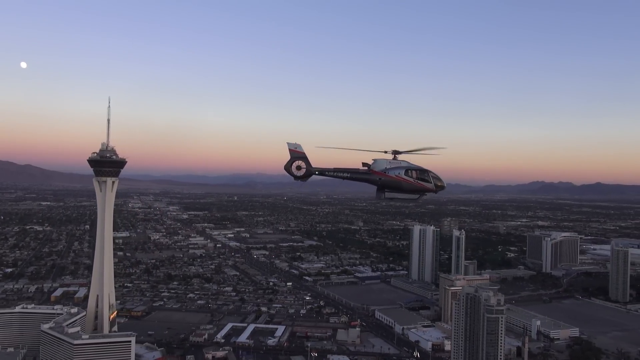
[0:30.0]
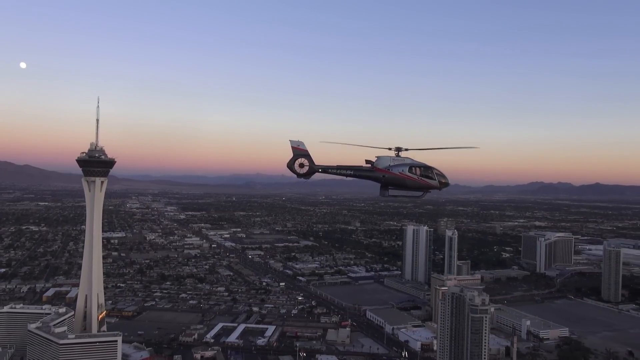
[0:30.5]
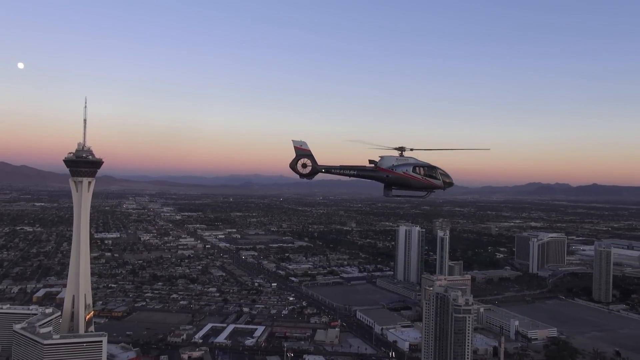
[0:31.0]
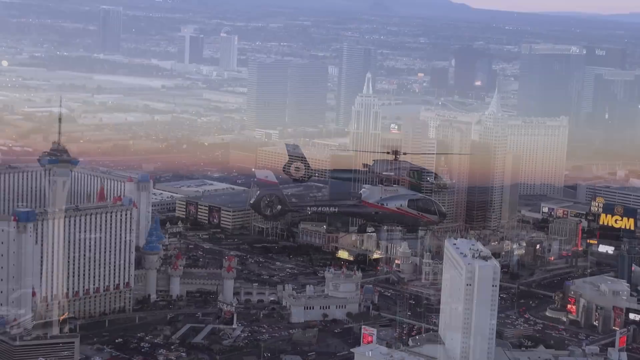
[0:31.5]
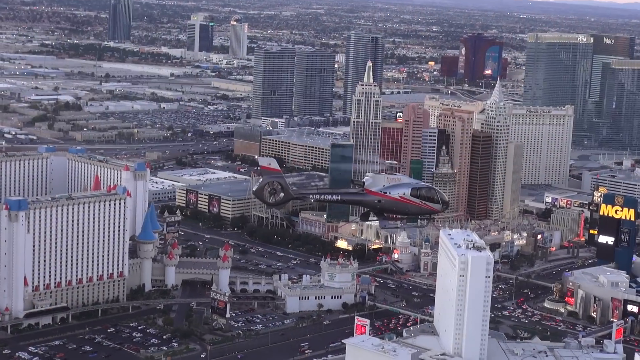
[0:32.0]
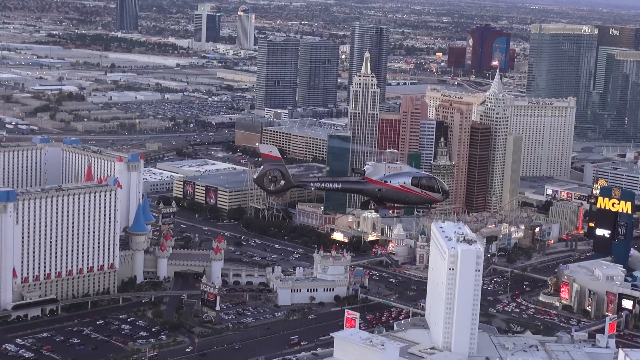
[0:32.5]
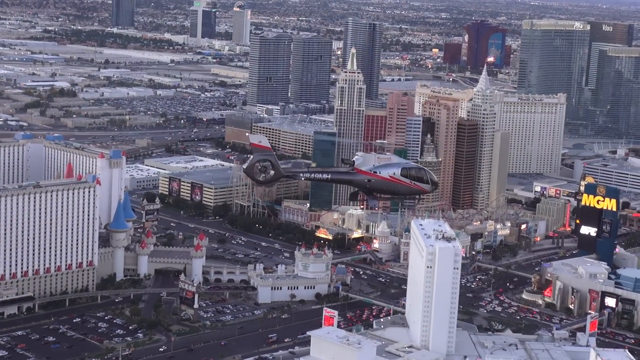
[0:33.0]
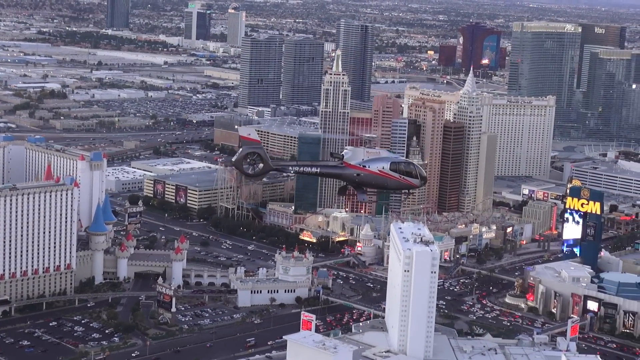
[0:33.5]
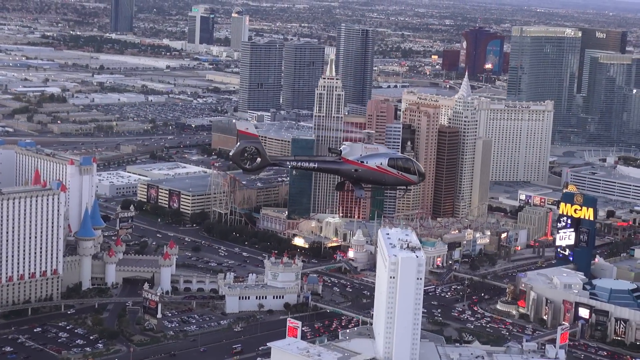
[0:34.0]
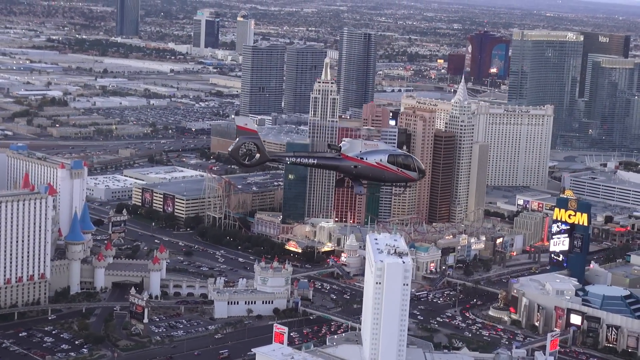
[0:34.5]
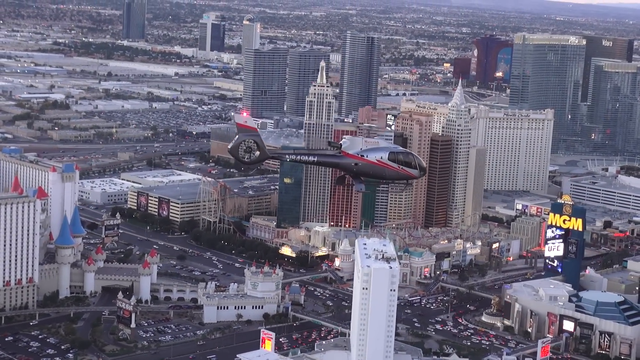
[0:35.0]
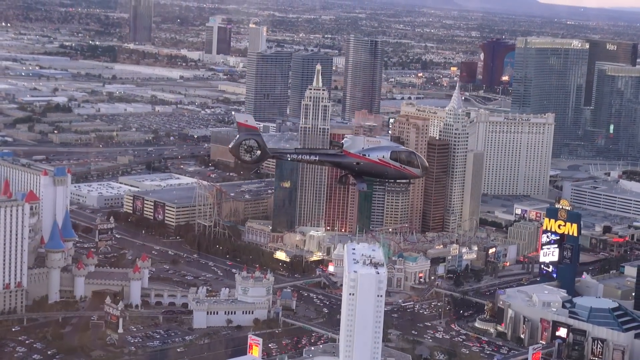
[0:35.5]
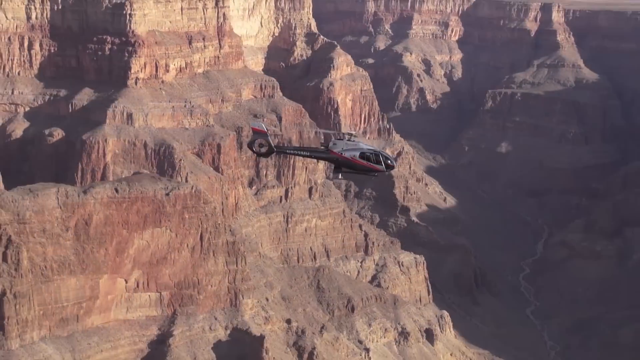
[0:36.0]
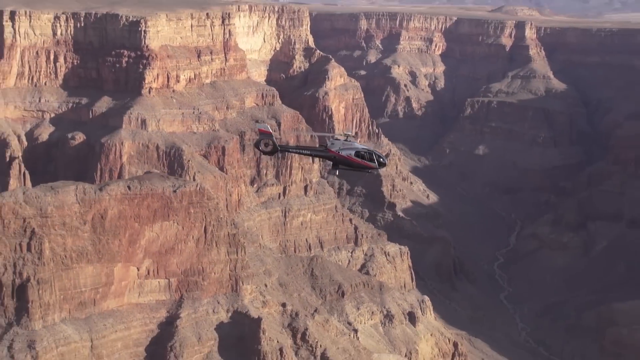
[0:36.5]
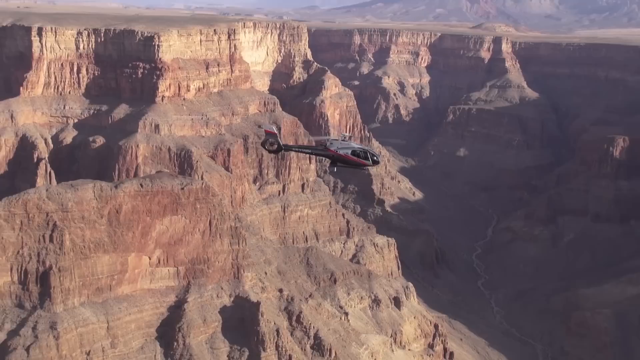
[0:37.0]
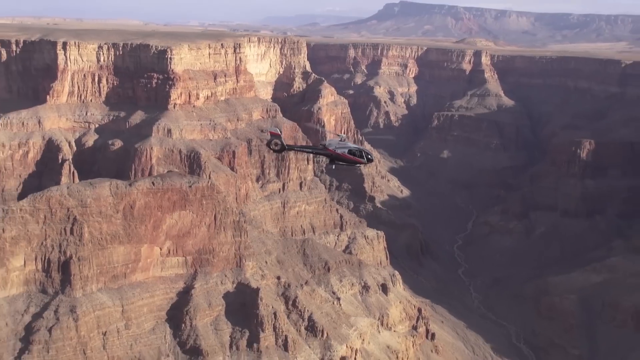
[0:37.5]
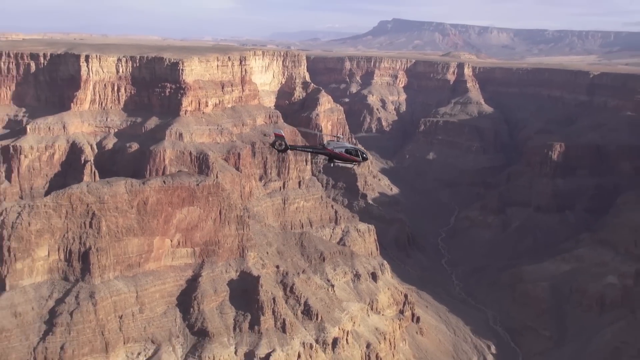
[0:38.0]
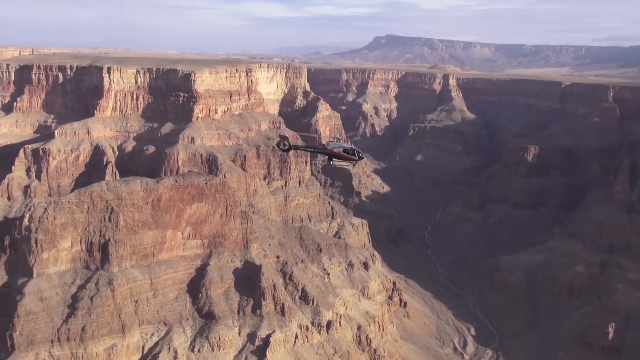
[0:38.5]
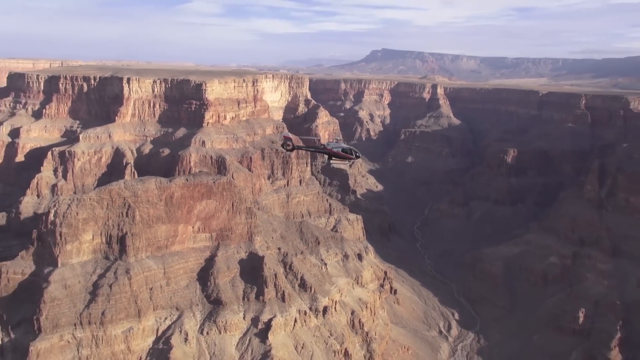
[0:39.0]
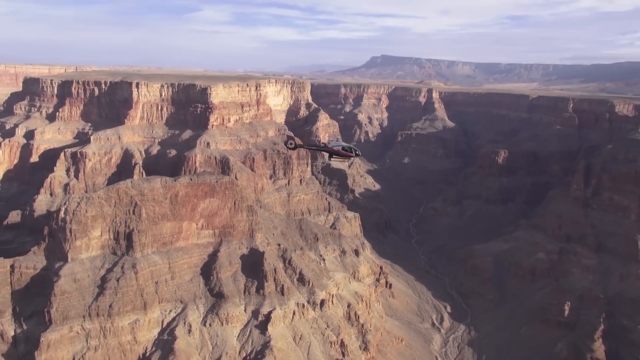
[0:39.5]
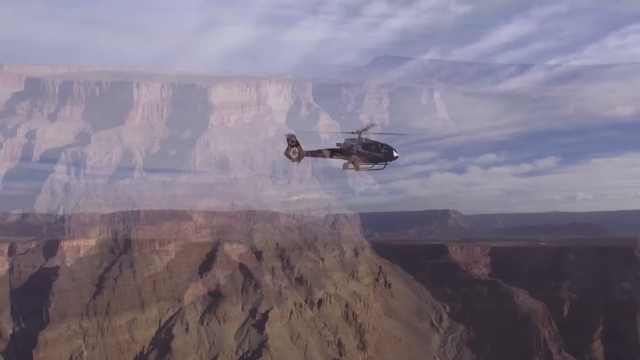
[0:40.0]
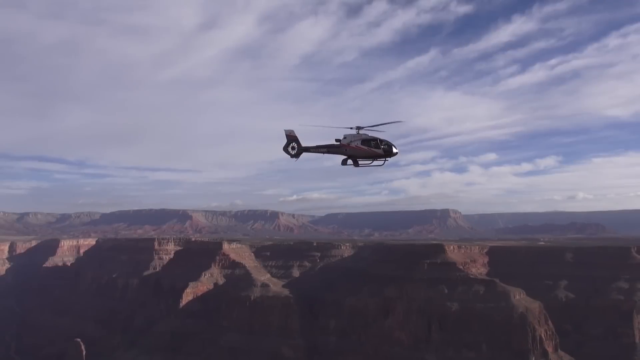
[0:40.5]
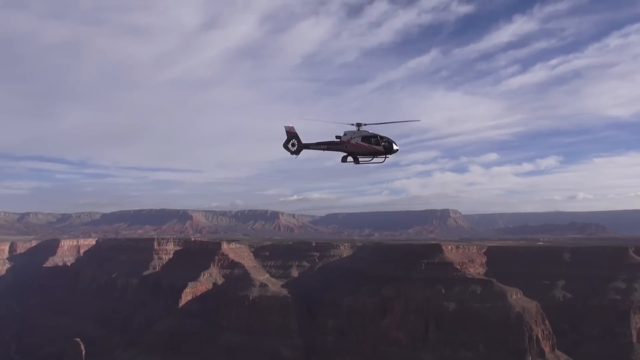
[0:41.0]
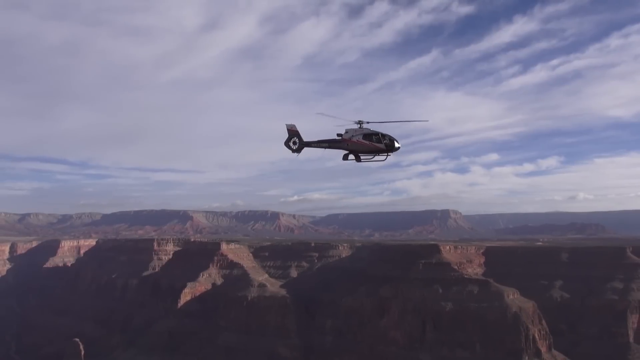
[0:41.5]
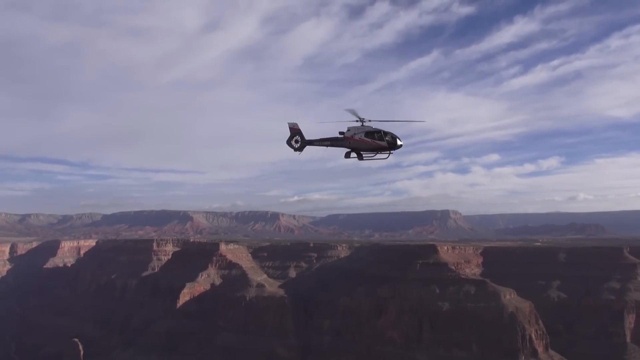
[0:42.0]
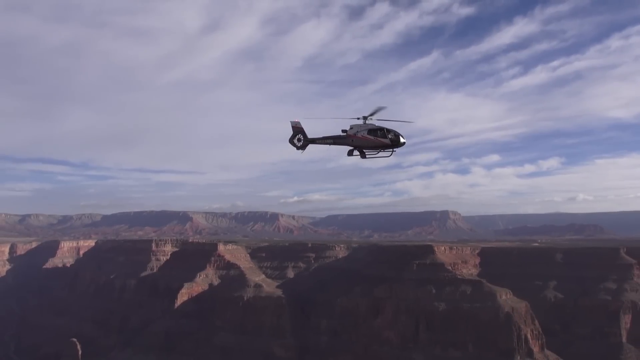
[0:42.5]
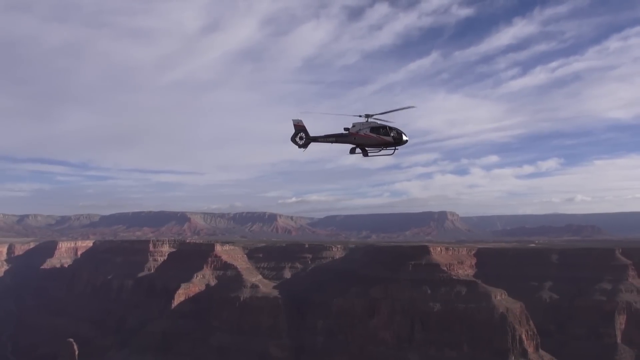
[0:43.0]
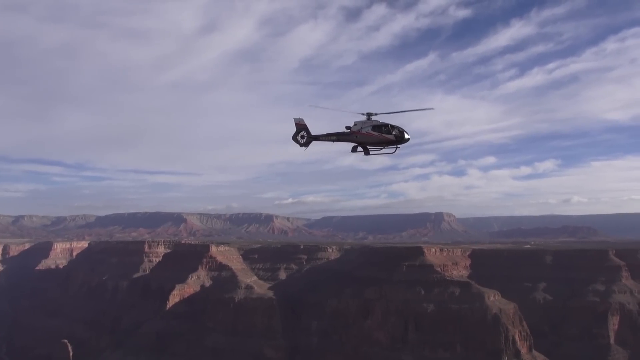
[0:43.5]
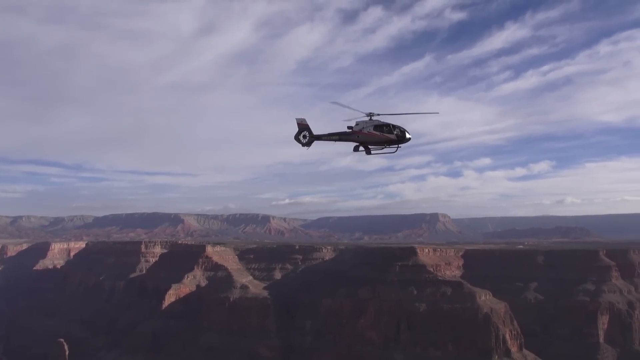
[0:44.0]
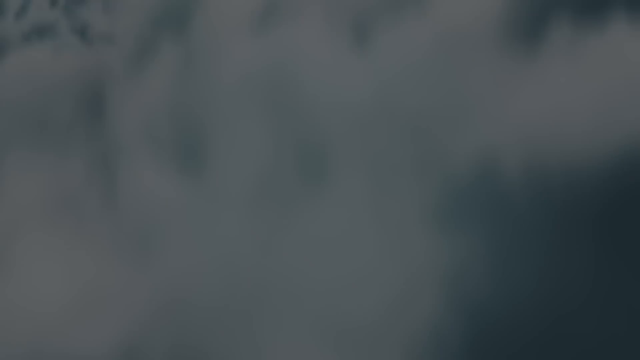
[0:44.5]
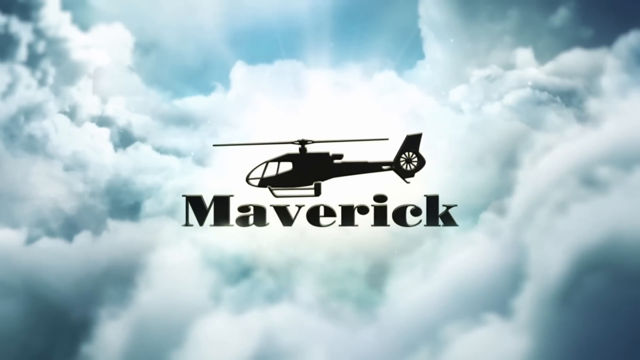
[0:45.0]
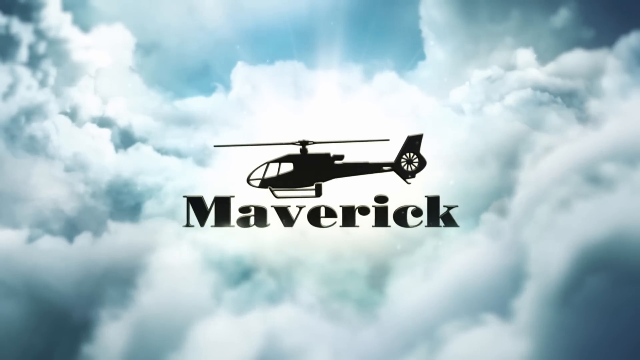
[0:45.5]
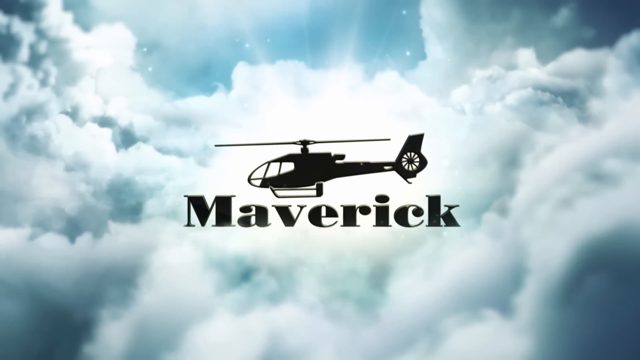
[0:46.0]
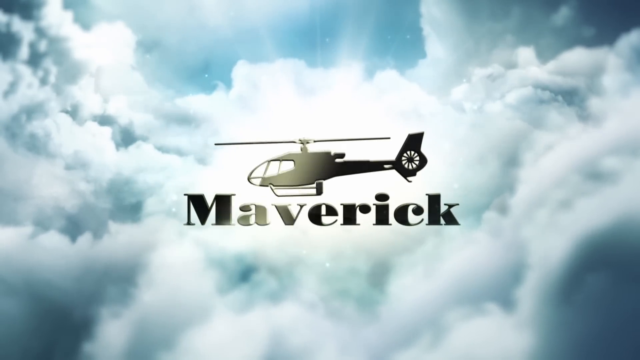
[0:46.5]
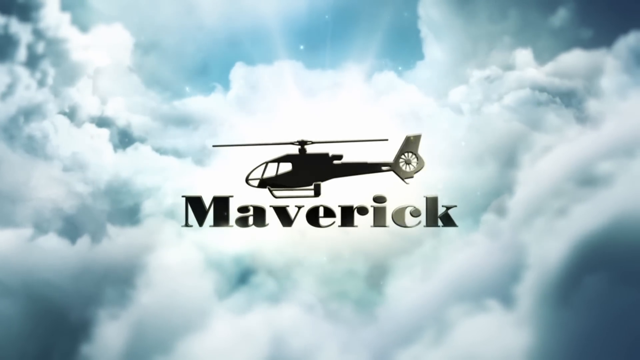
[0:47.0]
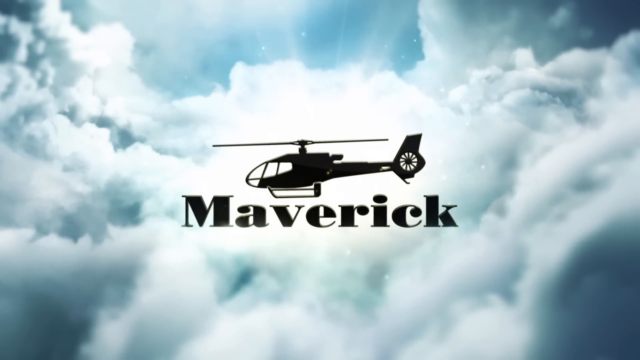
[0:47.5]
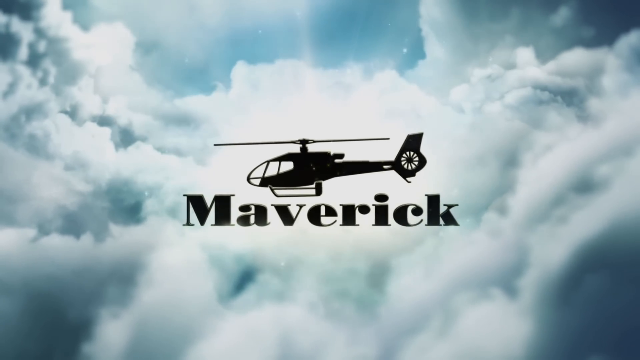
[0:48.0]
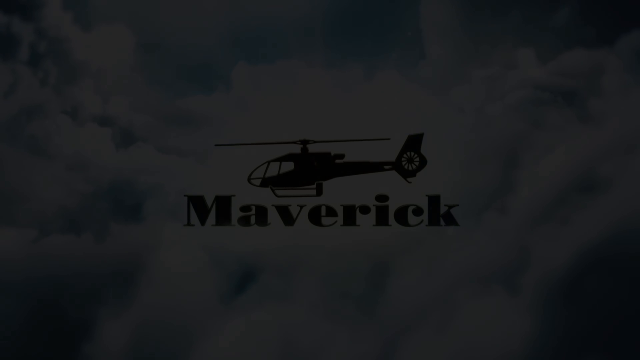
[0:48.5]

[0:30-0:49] Mountainous land lies just outside the city, which seems to be New York. The view then goes back to the mountains, showing the mountainous land and the city close to each other.